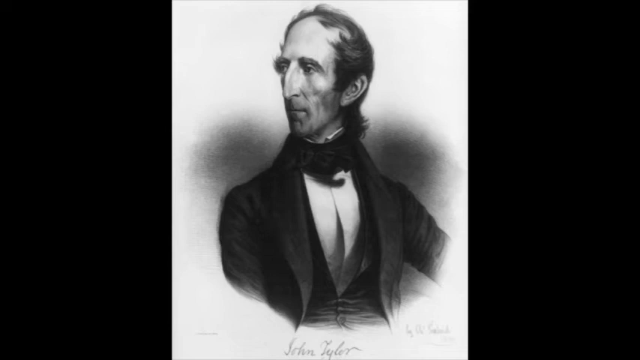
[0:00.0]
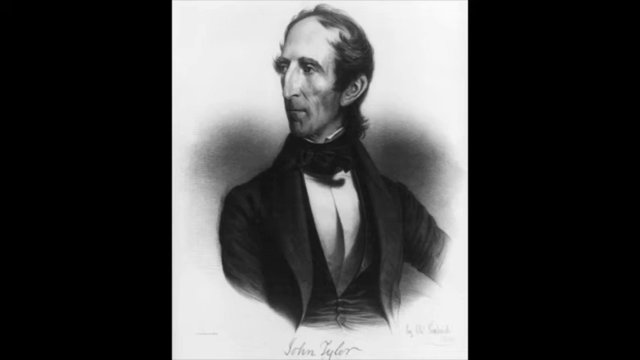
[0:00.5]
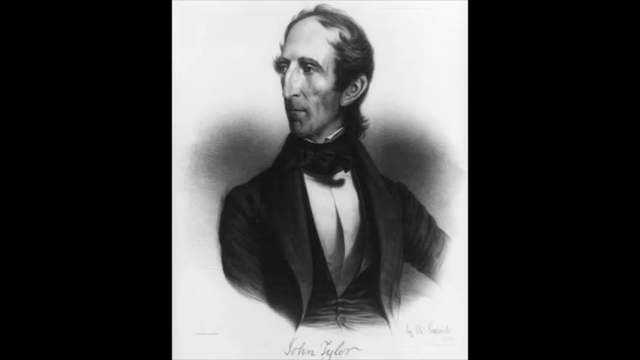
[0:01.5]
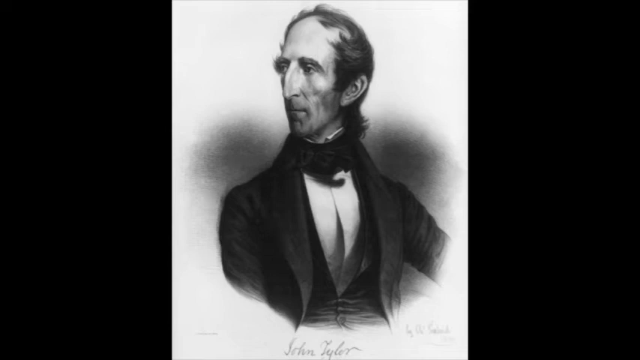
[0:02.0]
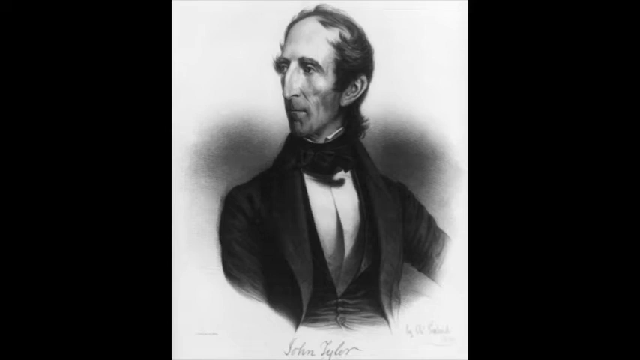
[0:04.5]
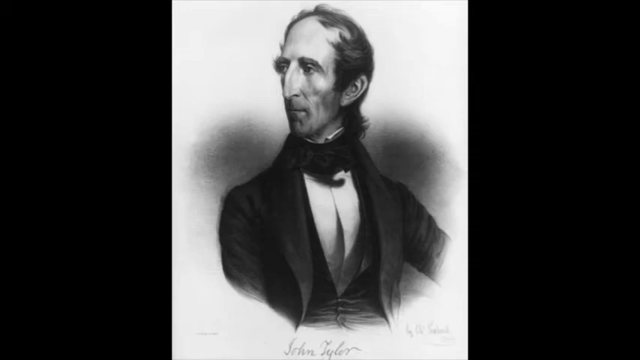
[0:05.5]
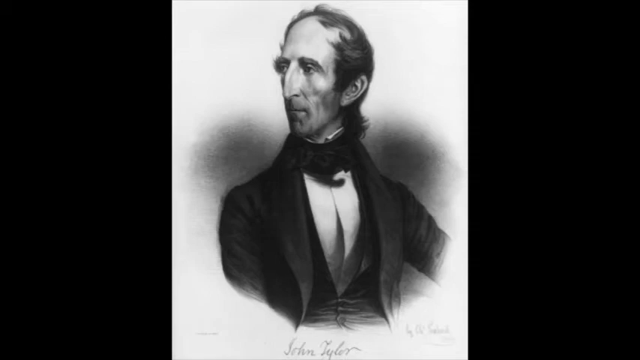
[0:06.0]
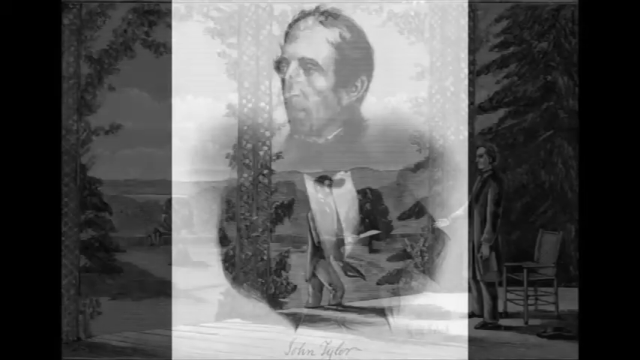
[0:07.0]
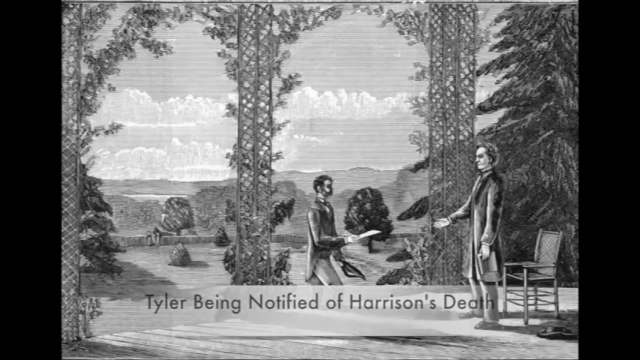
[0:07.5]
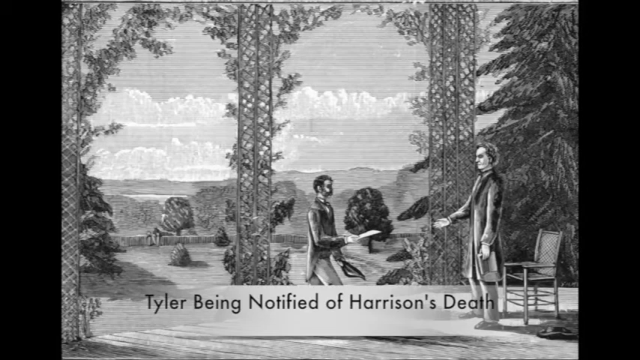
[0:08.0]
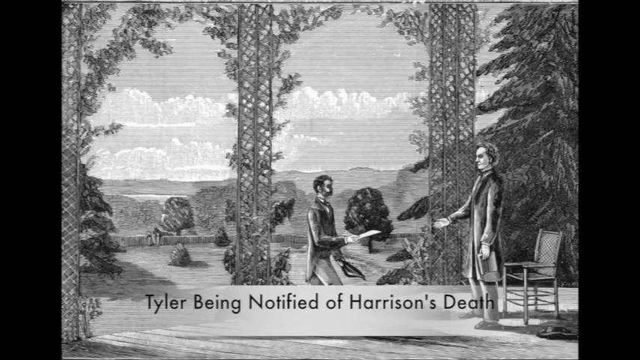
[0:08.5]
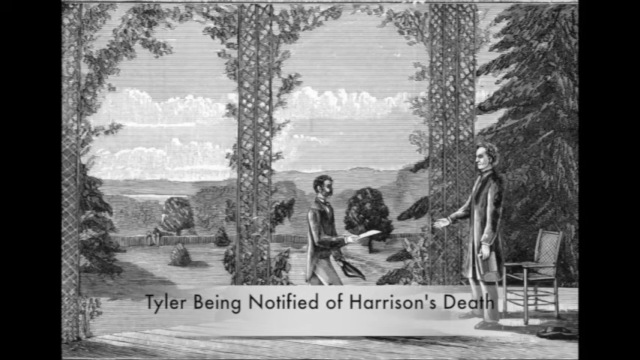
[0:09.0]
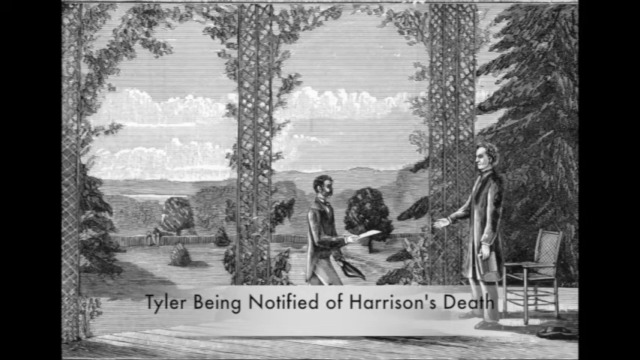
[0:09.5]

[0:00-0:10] The video opens on a still black-and-white drawing on a white background of a man wearing 1800s or 1700s era clothing: a black coat with a sort of dress tie. He looks toward the viewer's left. The image then cuts to a new drawing of a man standing on a raised platform surrounded by various trellises, in front of a rocking chair. Another man on a lower platform holds his hat in his left hand and a letter in his right, holding it out toward the man on the raised platform. The image is labeled "Tyler being notified of Harrison's death."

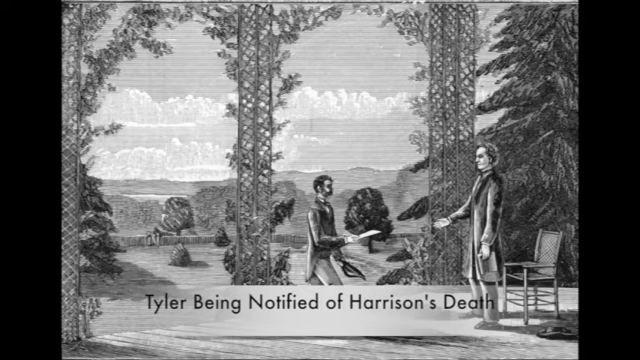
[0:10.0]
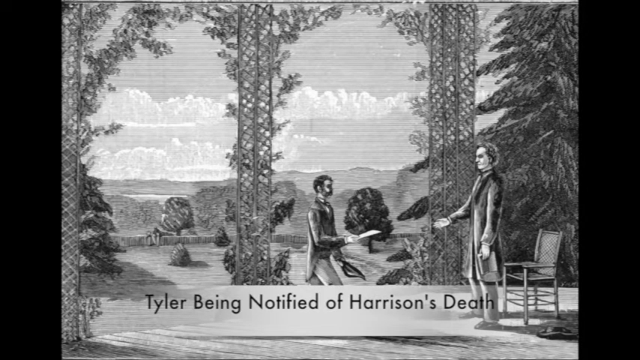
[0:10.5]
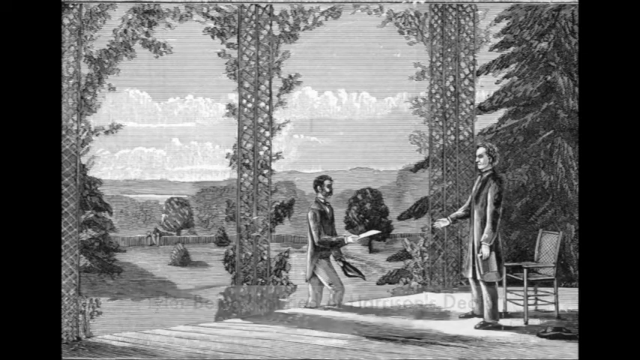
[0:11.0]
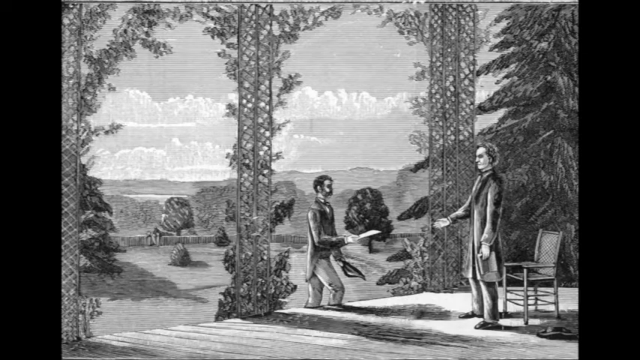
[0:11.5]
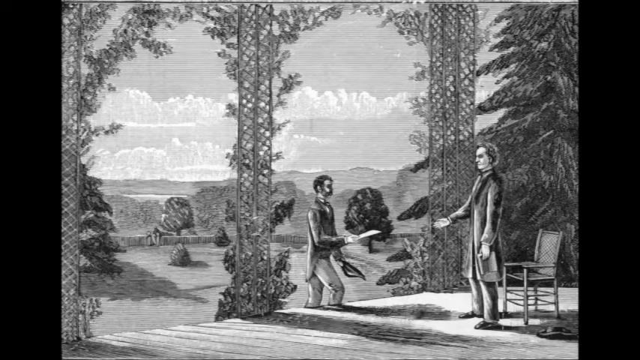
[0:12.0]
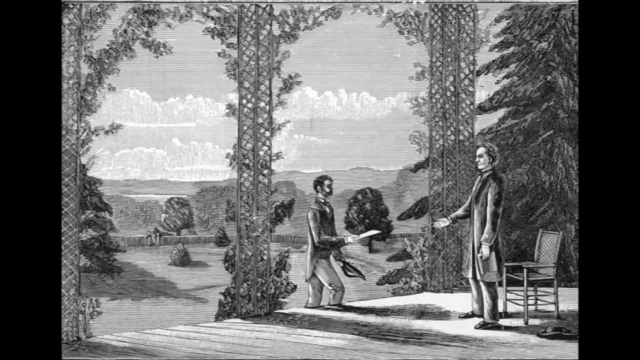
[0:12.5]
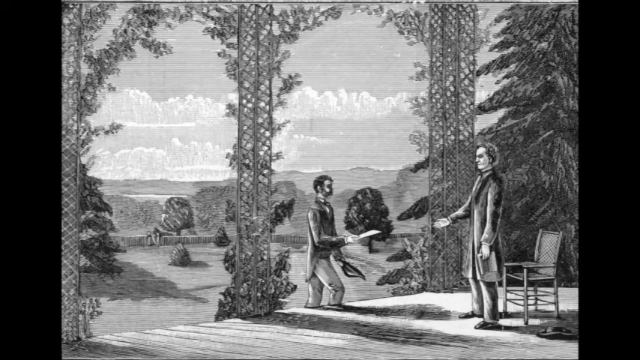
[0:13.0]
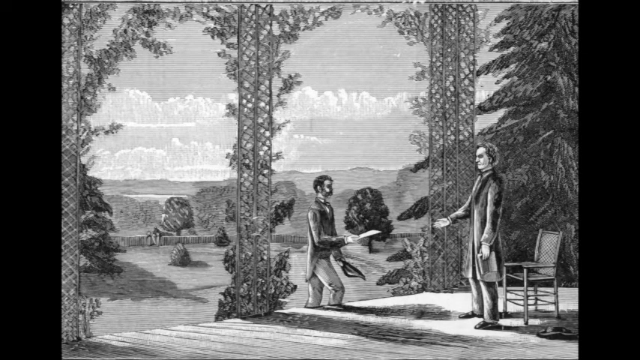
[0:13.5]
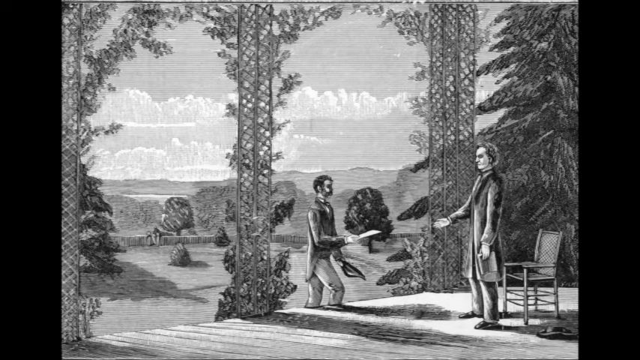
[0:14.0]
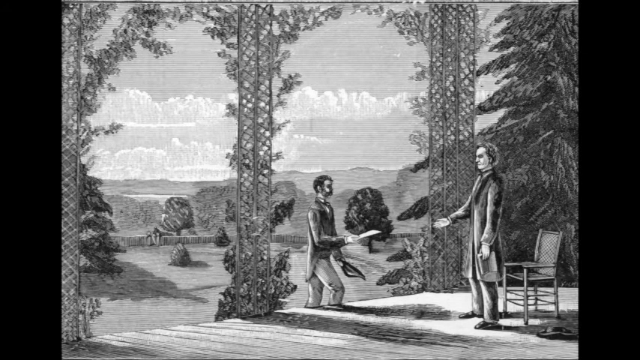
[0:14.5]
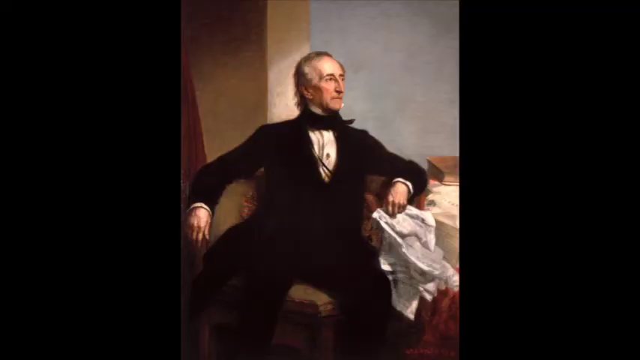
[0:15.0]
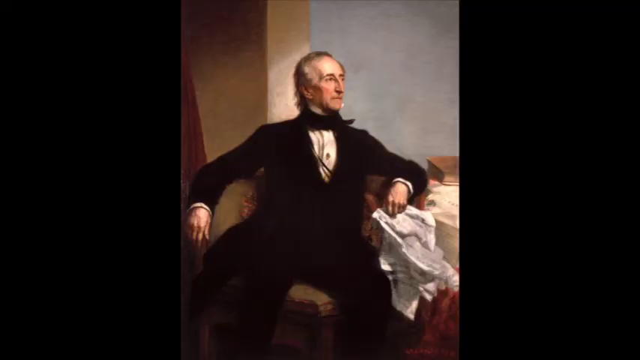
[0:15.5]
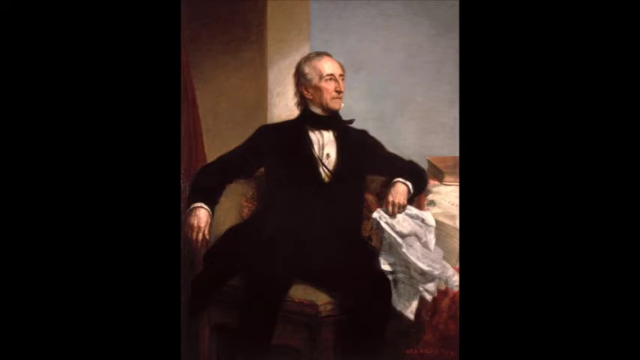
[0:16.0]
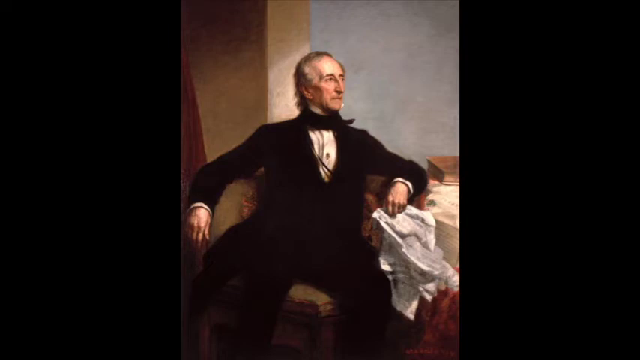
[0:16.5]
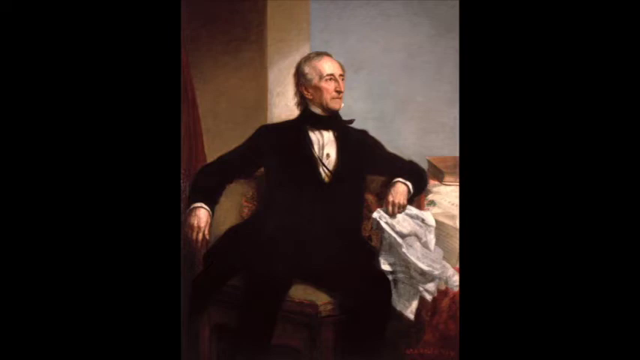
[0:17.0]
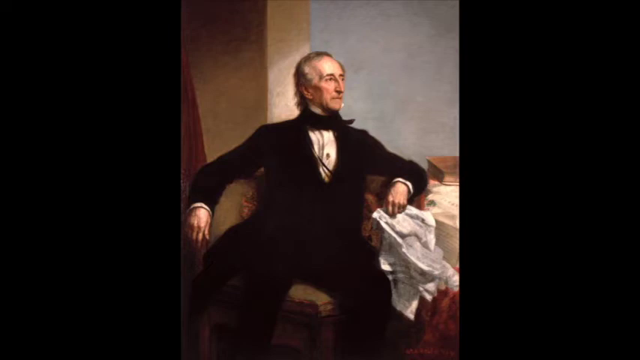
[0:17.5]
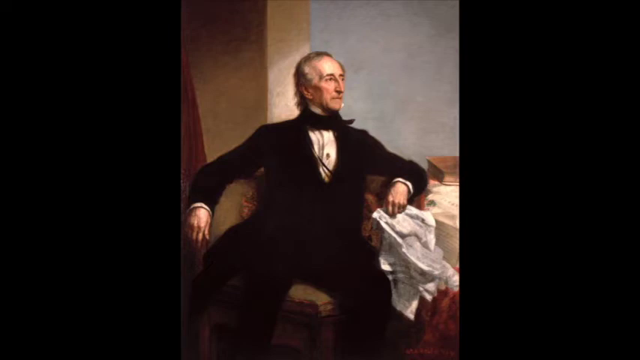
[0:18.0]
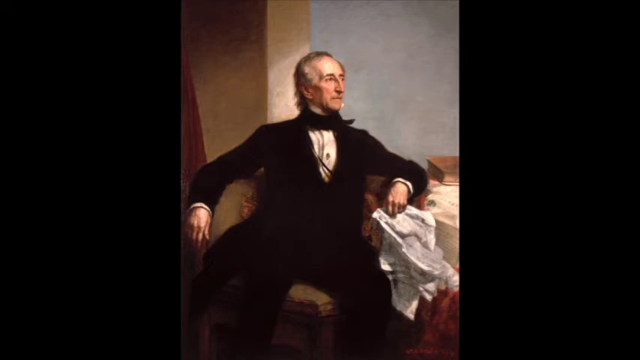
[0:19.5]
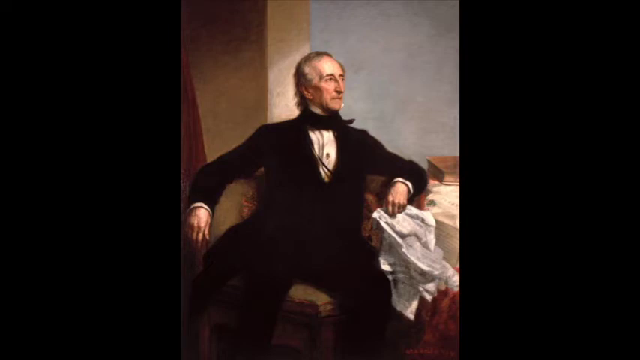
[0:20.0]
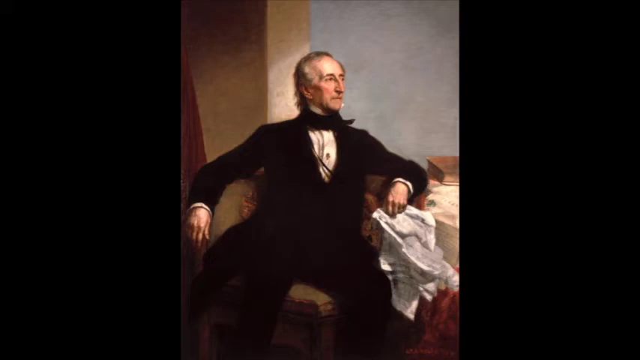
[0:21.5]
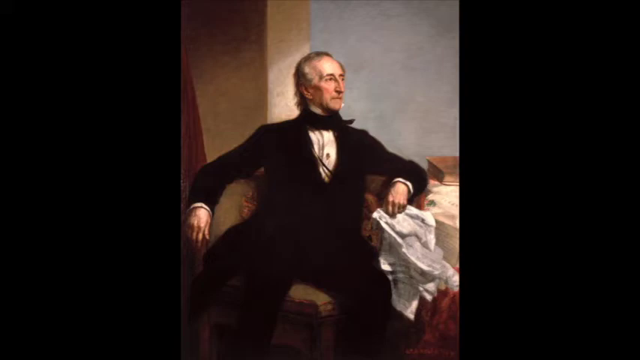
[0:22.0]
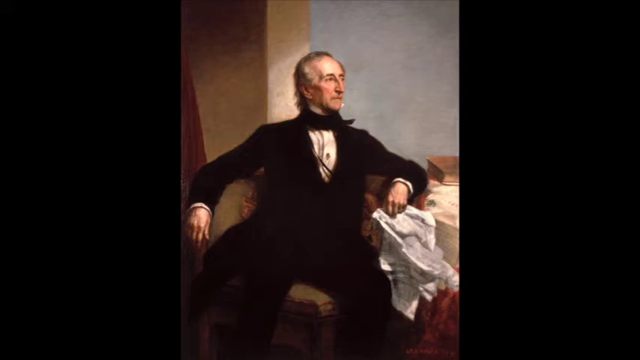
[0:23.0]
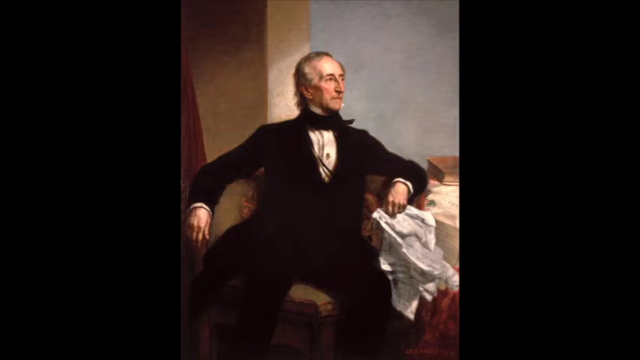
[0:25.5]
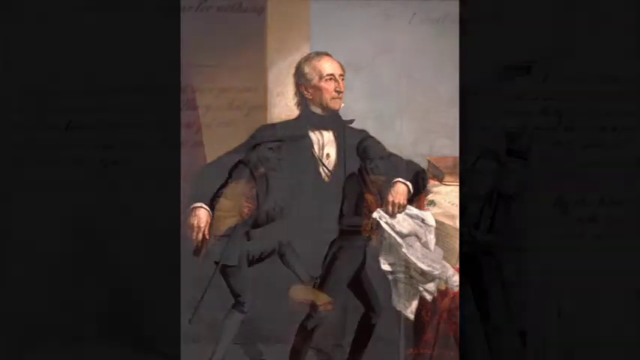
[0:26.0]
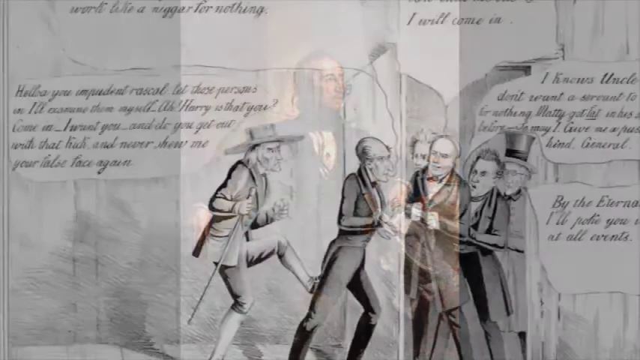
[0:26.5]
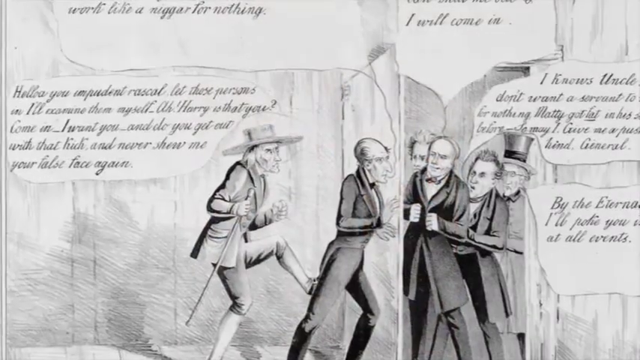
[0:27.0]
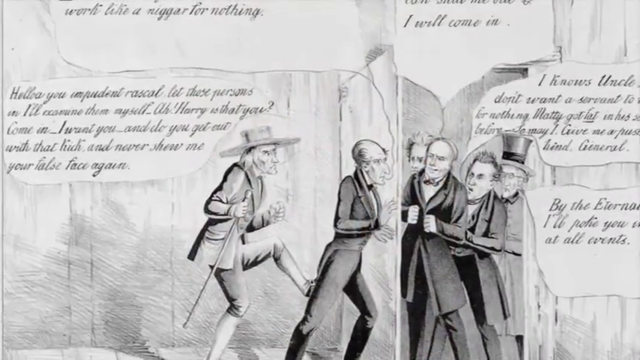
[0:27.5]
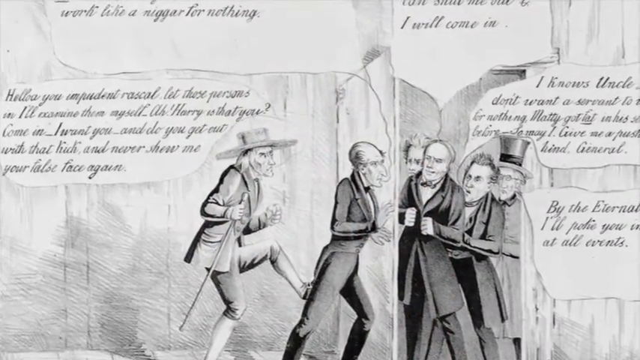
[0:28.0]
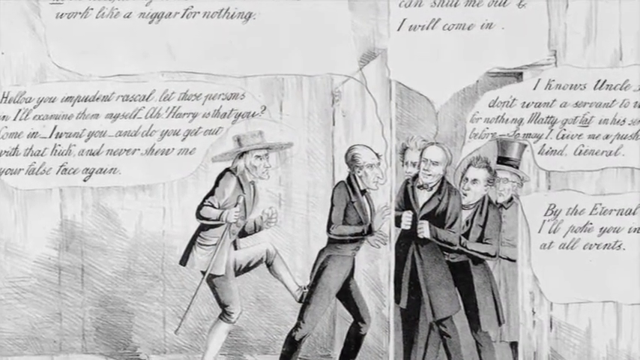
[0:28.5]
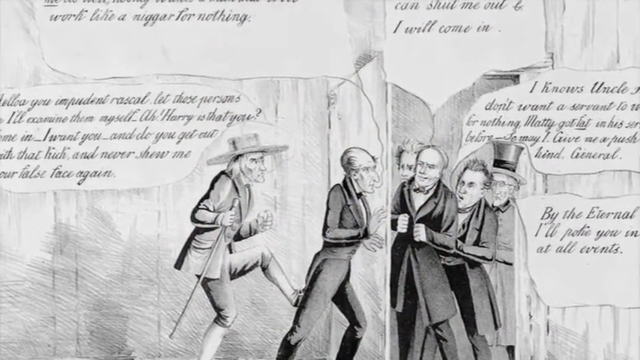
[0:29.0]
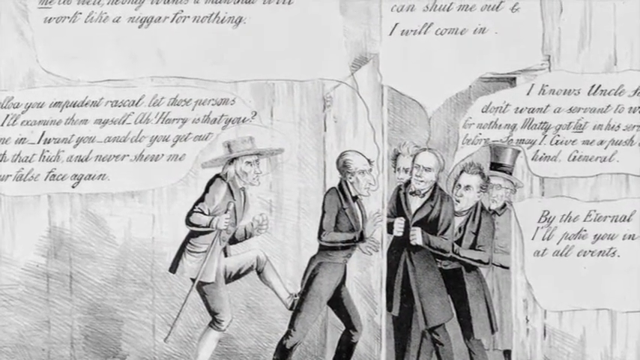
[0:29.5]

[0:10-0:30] A still drawing shows a man standing on a raised platform in front of a rocking chair. The platform is bordered by multiple vine trellises, and another man is stepping onto the platform with his right leg, holding a letter outward in his right hand toward the man in front of the rocking chair. The man with the letter also holds a hat in his left hand. Text labeling the drawing reads "Tyler being notified of Harrison's death." The text disappears and the image is slowly zoomed in on. It then cuts to a colored painting of an older man lounging in a wooden chair. In his left hand is a crumpled newspaper hanging down loosely, and his right hand rests on the armrest of the chair he is sitting in. The camera slowly zooms in on the still painting.